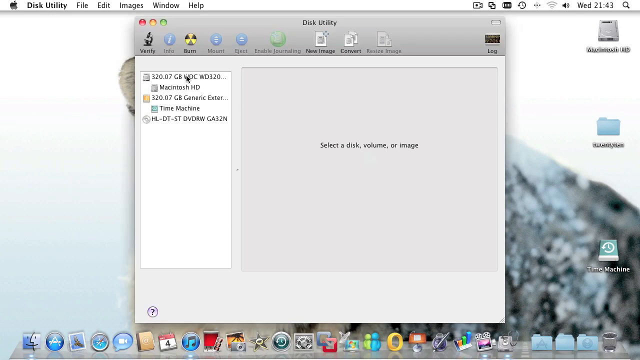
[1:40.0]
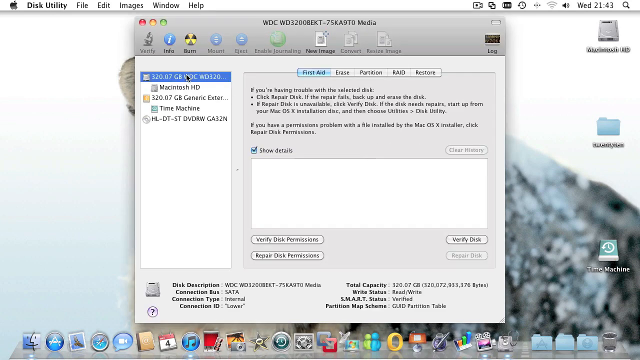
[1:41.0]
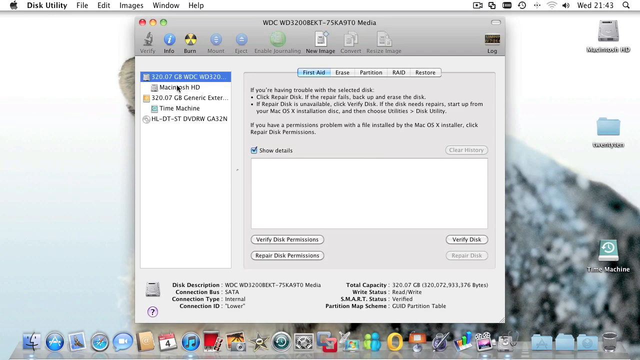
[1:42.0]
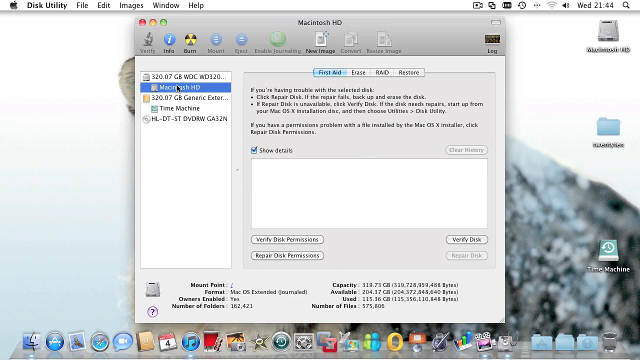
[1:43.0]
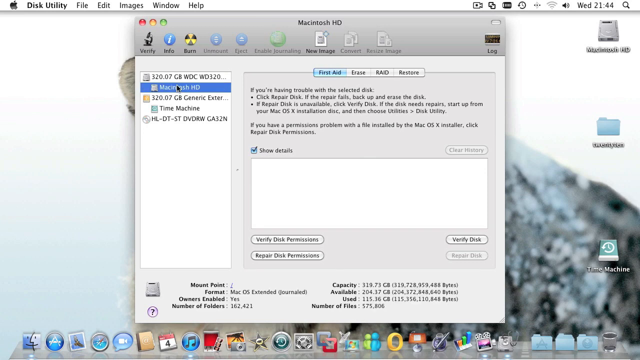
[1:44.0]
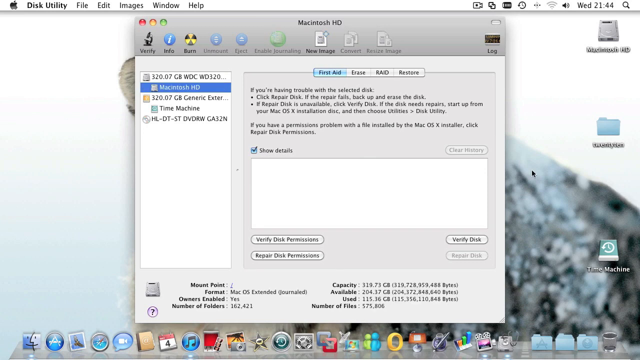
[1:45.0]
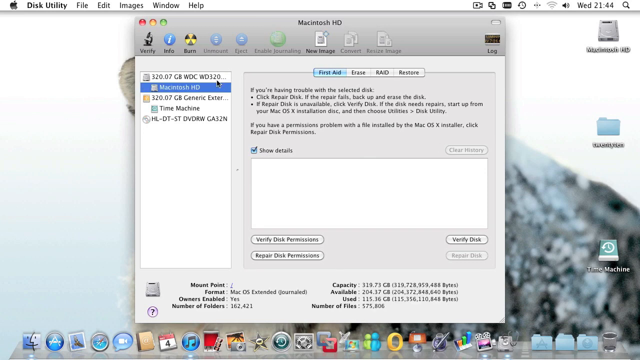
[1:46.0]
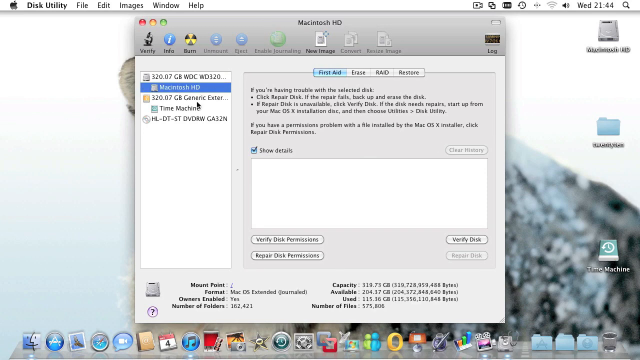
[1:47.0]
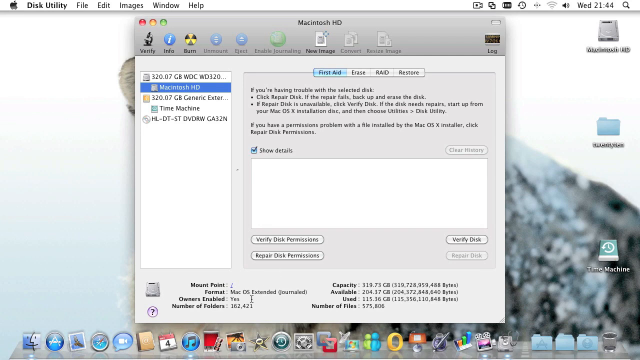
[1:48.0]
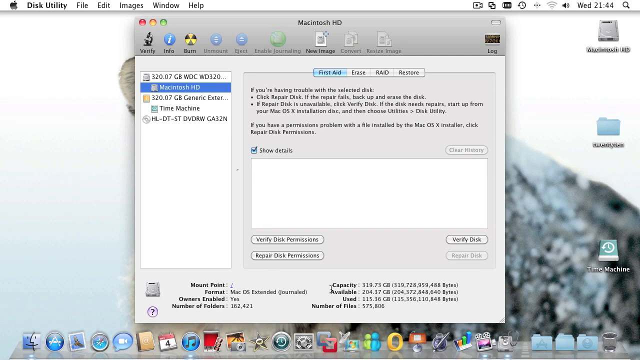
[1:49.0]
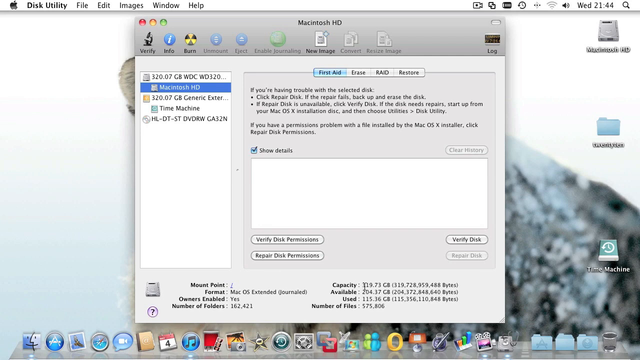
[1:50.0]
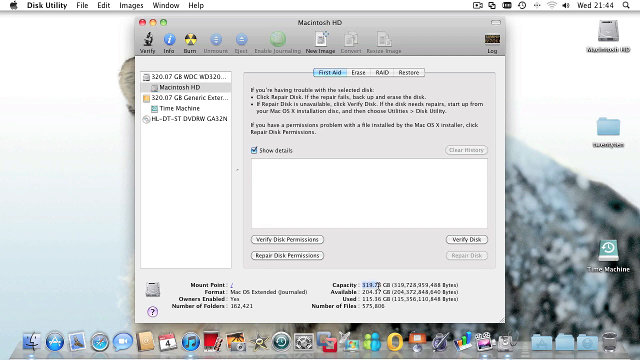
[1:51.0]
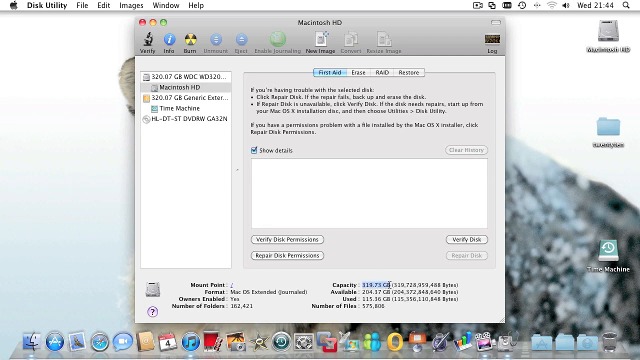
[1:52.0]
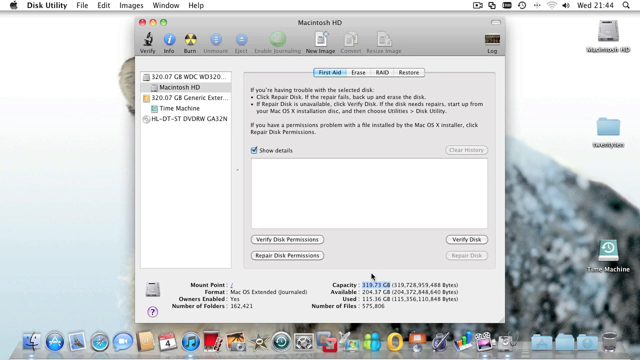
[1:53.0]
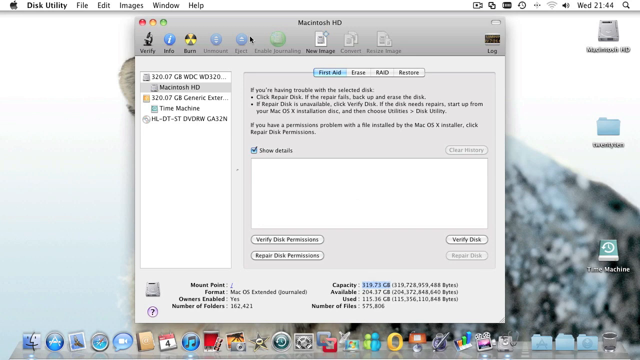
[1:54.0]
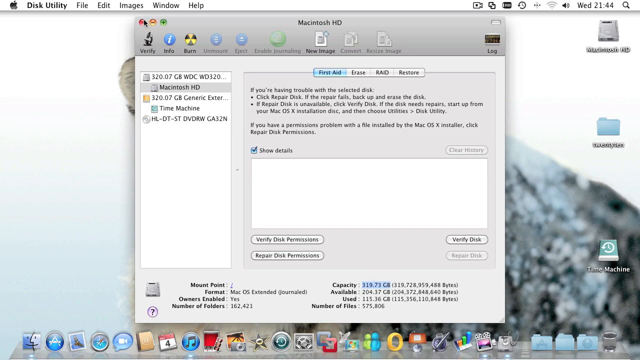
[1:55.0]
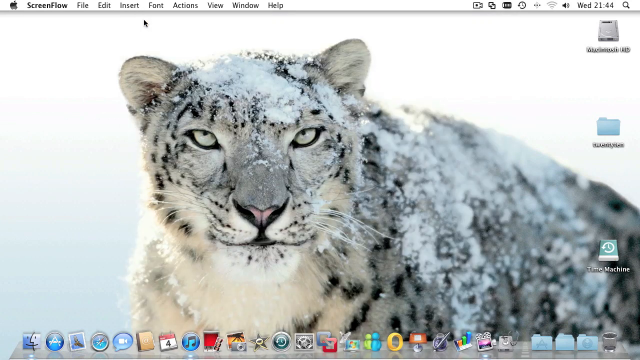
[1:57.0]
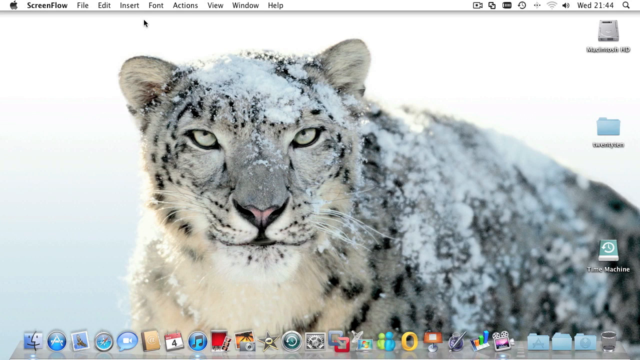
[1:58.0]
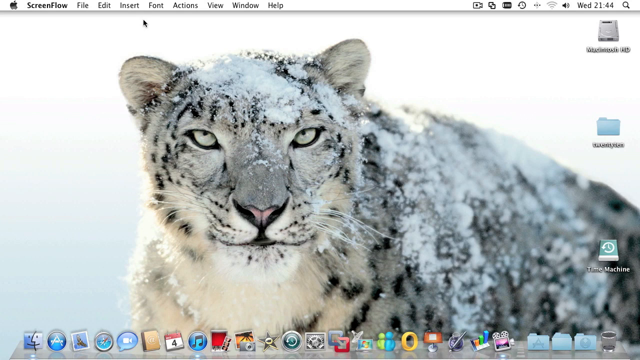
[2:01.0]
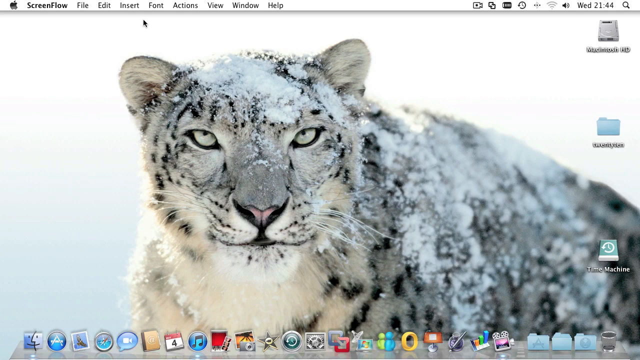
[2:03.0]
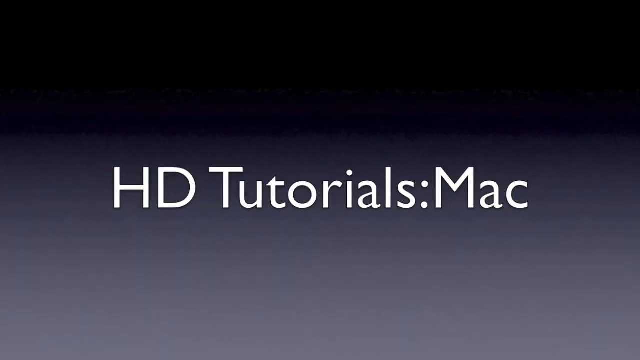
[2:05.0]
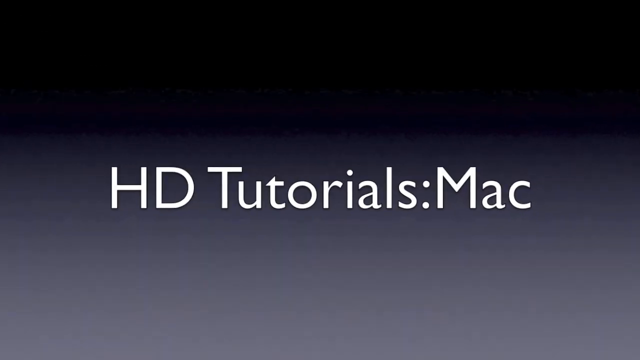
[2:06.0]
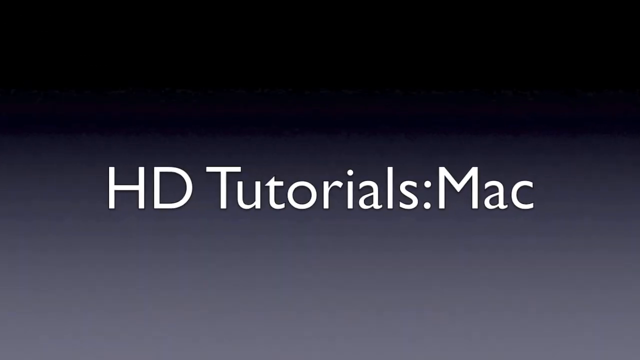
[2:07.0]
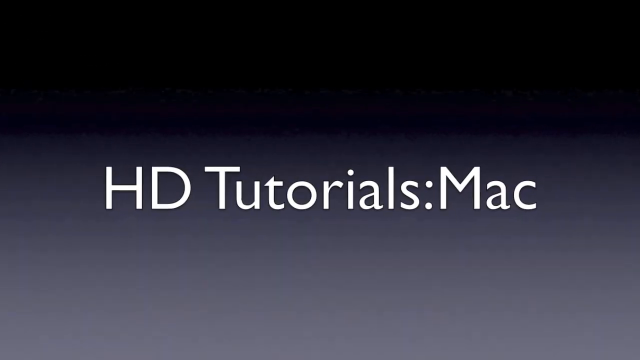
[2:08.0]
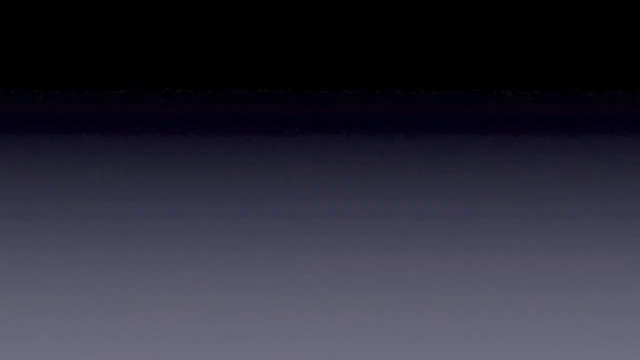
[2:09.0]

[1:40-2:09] A Mac desktop shows a window called Disk Utility. The cursor hovers over "32.07 GB WDC" above the icon for Macintosh HD. Underneath is another entry for a 320.7 GB generic external Time Machine, and below that an icon labeled "HL-DT-ST DVD RW GA 32n." The toolbar has options for verify, info, burn, mount, eject, enable, new image, convert, resize image, and log. The cursor clicks on the 320.07 WDC entry, which shows tabs for First Aid, Erase, Partition, RAID, and Restore, along with text beginning "if you're having trouble with the selected disk click repair disk" and further instructions about verifying and repairing disks and permissions. Below that is a show details area with a blank white panel, then buttons for Verify Disk Permissions, Repair Disk Permissions, and Verify Disk, and a Repair Disk button that is not highlighted and cannot be used. The cursor then clicks the Macintosh HD hard drive, the mouse moves to the right across the screen and clicks, the pointer turns into a text cursor, and it highlights the capacity of 319.73 GB. The window is then closed with the red button. The Mac desktop shows the gray tiger with green eyes and snow on it, with the mouse pointer staying above it, and then the screen fades. The next screen reads "HD tutorials: Mac" on a black screen with a gray and white ombre in the middle, and it stays there for the remainder of the video until it slowly fades out.